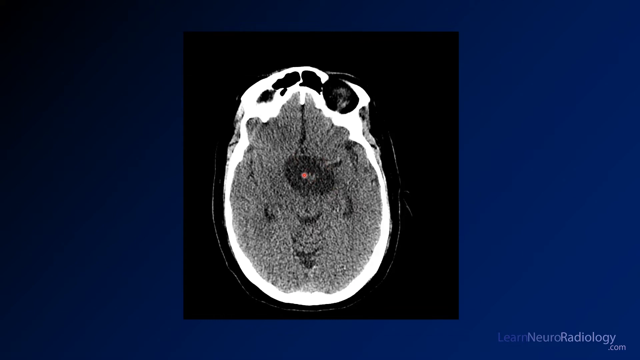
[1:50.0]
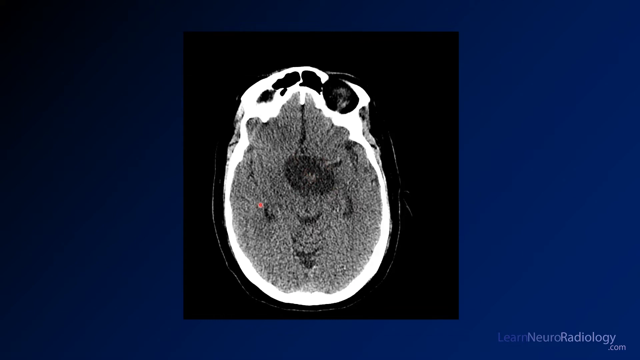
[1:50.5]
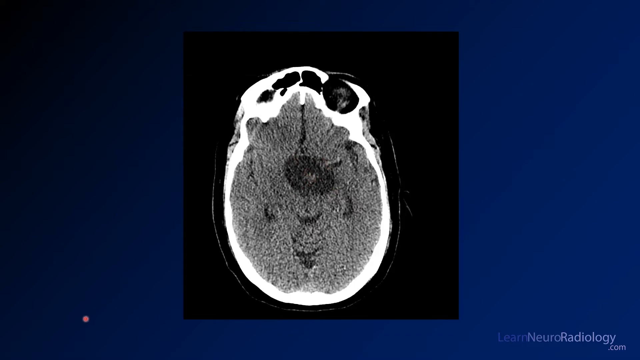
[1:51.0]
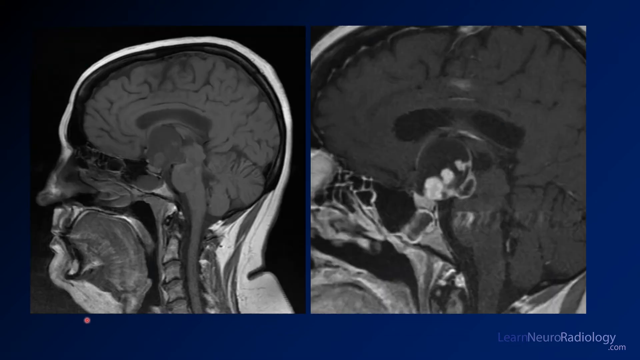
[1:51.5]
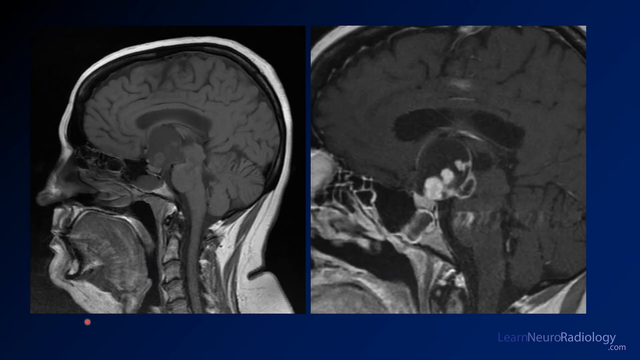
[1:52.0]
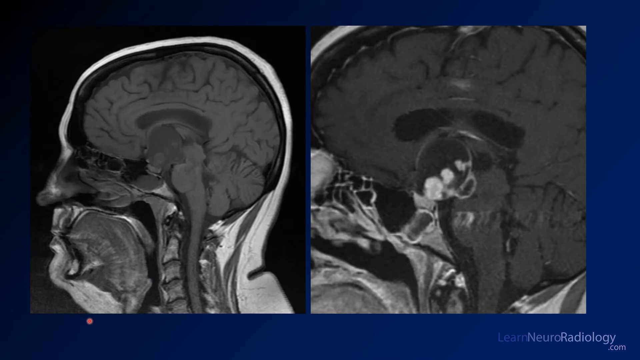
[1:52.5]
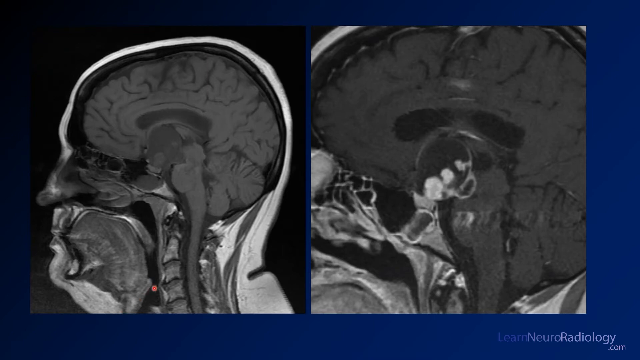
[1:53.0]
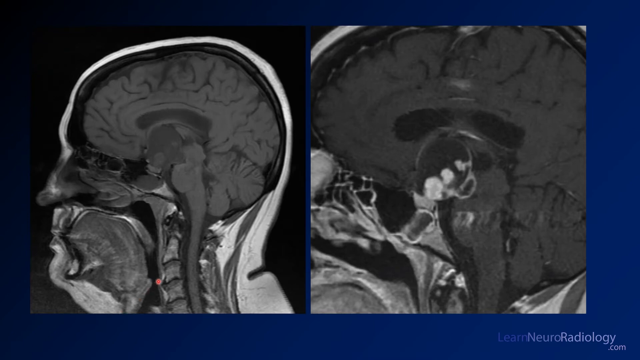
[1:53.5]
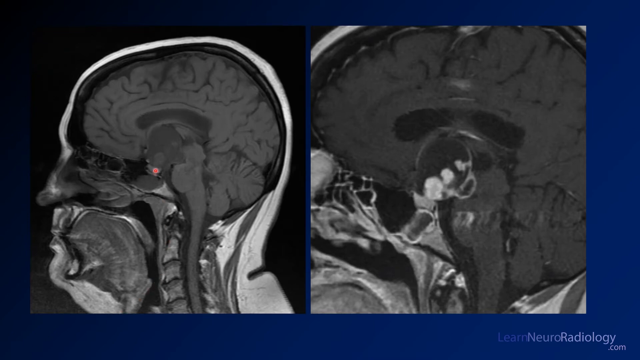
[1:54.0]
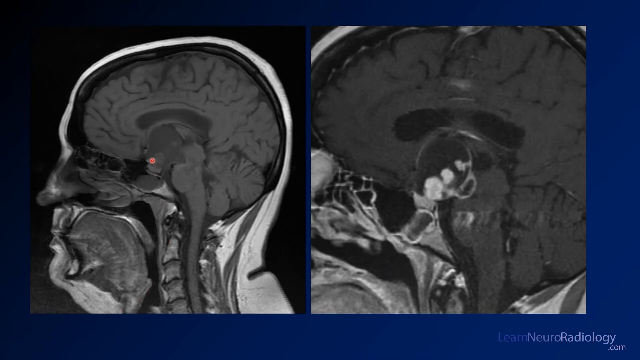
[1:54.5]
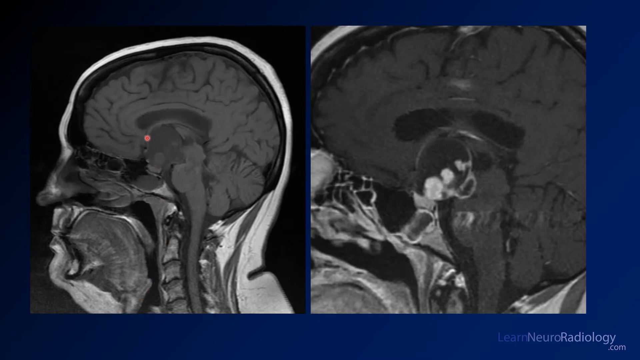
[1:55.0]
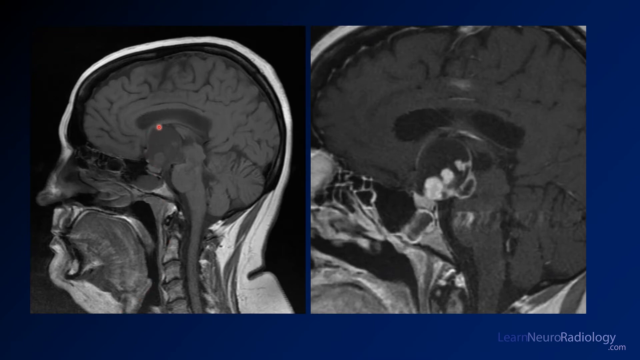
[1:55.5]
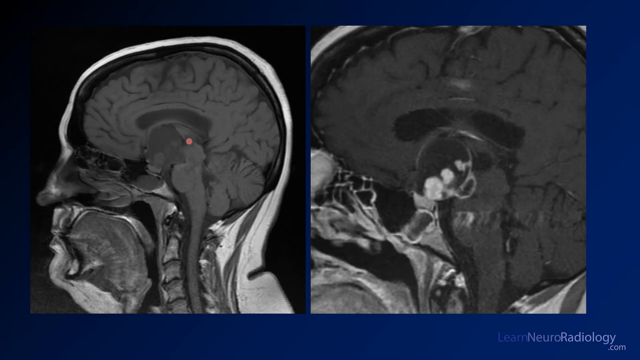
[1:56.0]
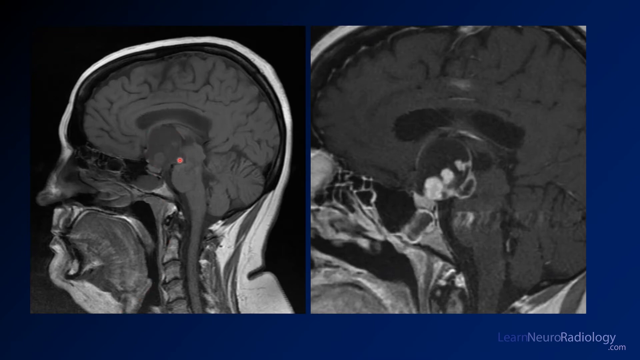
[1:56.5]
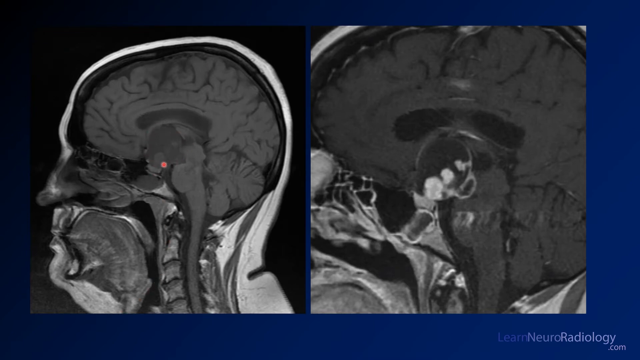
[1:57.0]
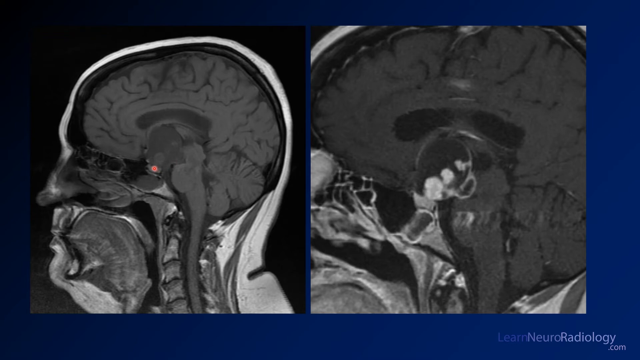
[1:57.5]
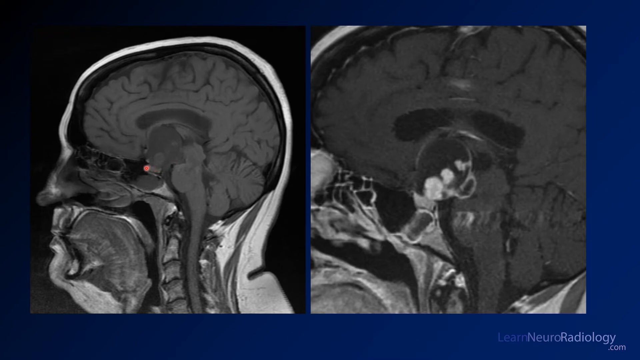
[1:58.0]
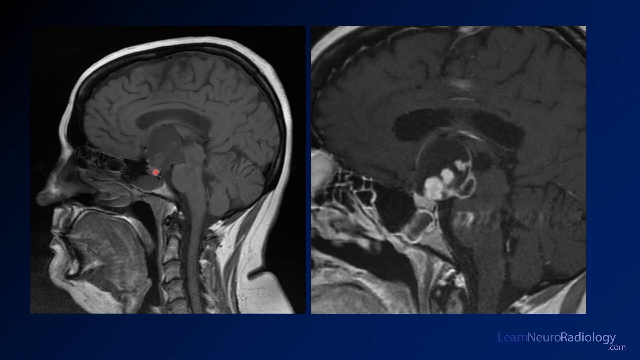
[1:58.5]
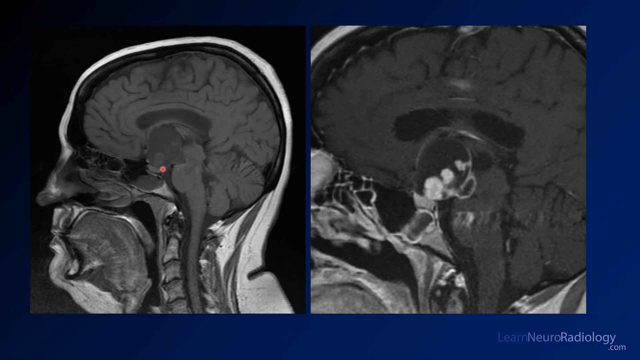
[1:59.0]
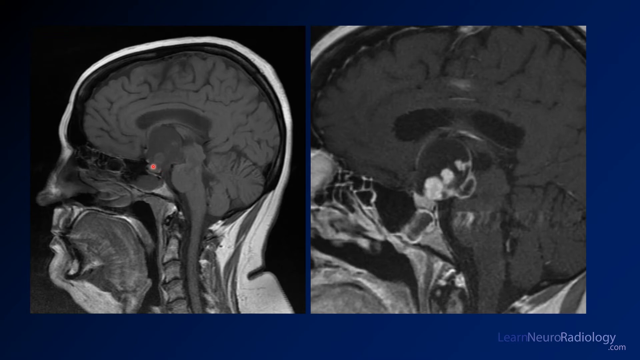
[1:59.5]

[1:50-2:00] The first image of the brain appears, with the pointer still pointing at the grey matter in the middle and the white matter within it. The video then moves to the two side-on CT or MRI scans of the brain side by side, with the forehead on the left and the zoomed-in image of the brain on the right showing some highlighted white matter. The red pointer shows where the highlighting is, moving to the gray matter in the middle. The video flips between the first image and the two side-on images to show exactly where the mass is.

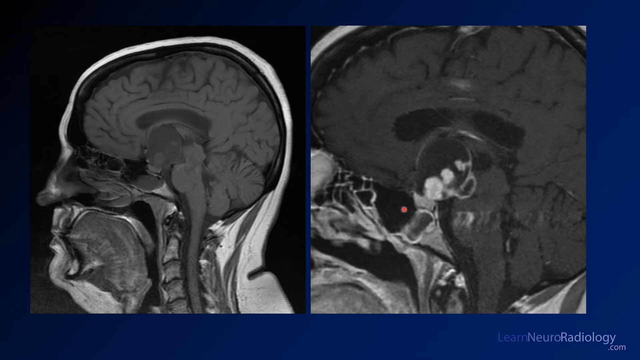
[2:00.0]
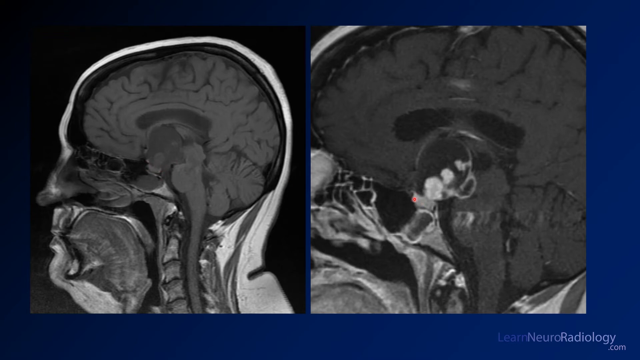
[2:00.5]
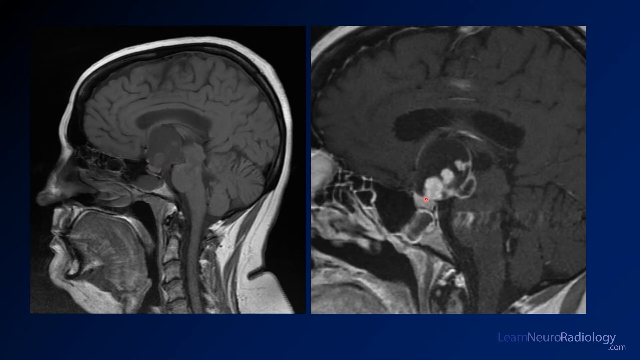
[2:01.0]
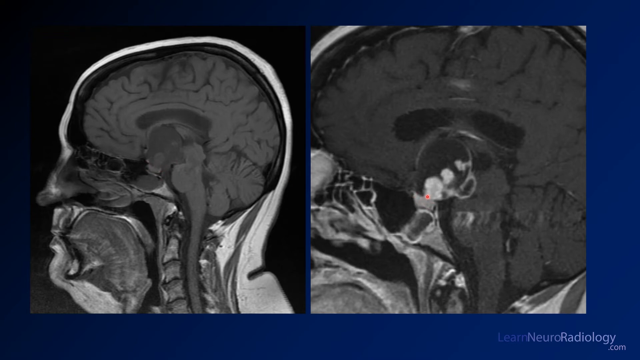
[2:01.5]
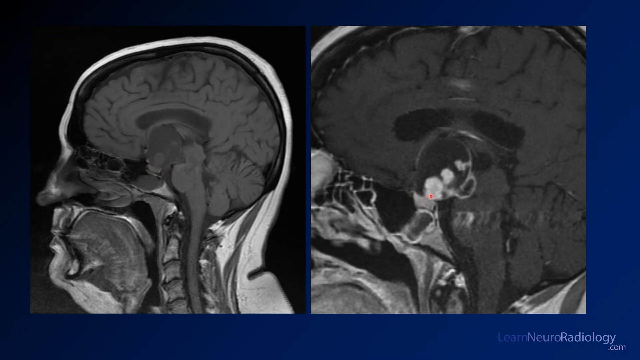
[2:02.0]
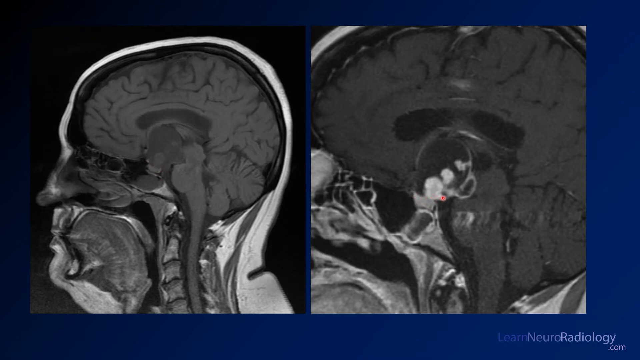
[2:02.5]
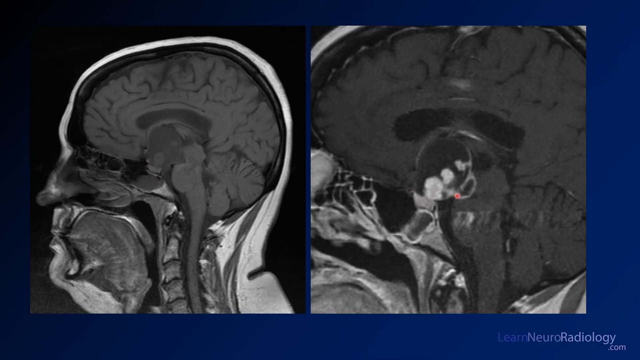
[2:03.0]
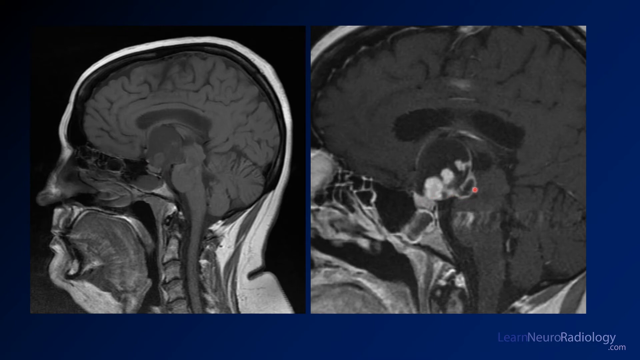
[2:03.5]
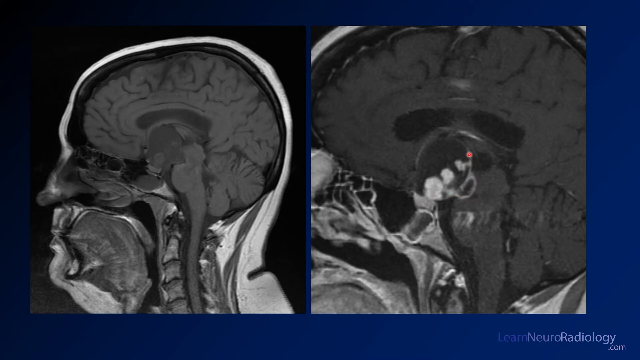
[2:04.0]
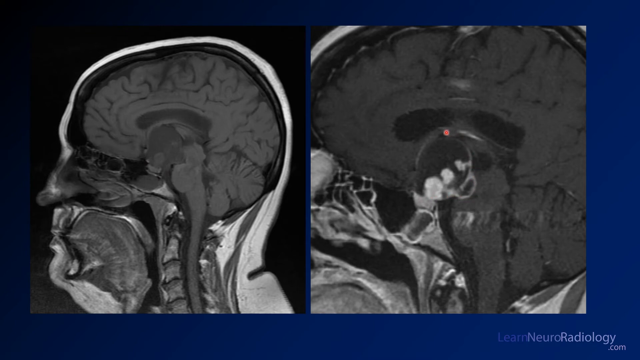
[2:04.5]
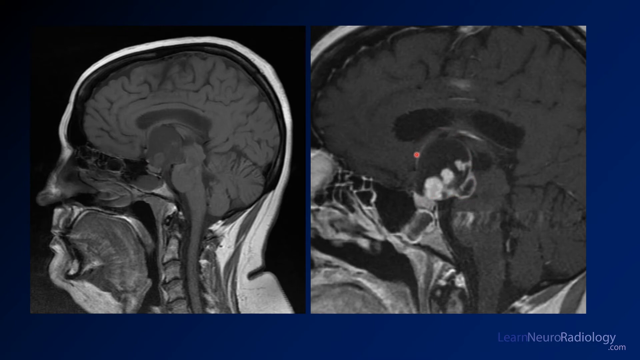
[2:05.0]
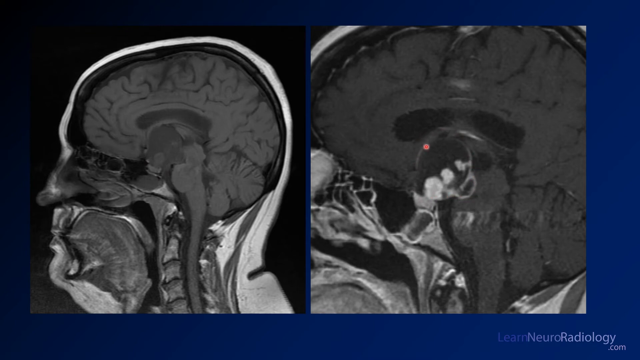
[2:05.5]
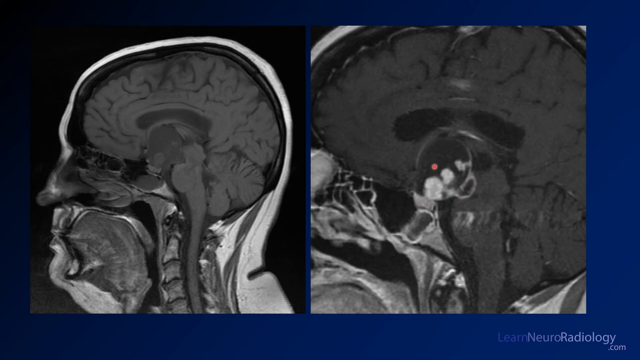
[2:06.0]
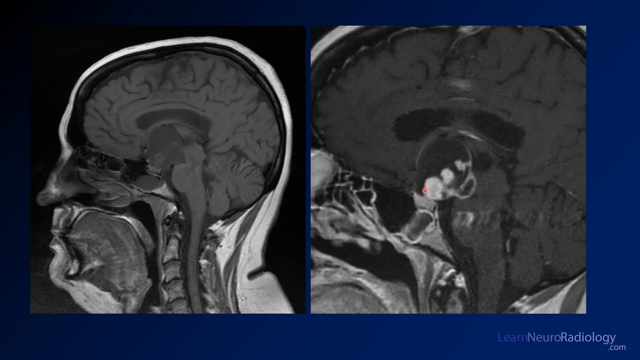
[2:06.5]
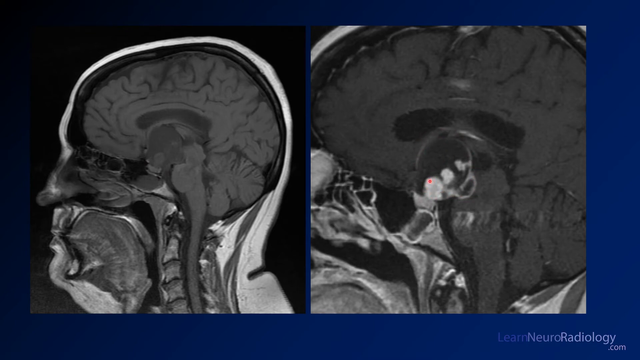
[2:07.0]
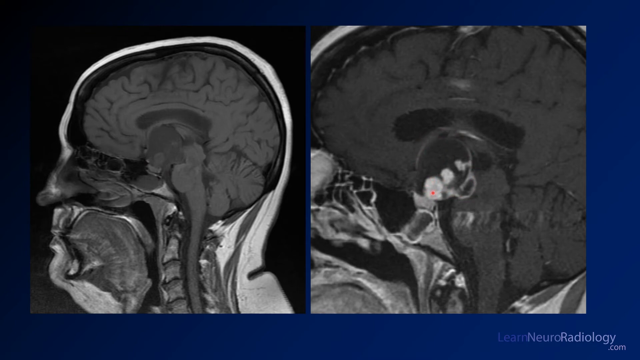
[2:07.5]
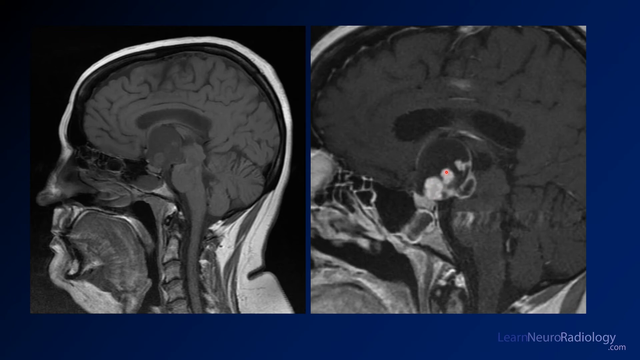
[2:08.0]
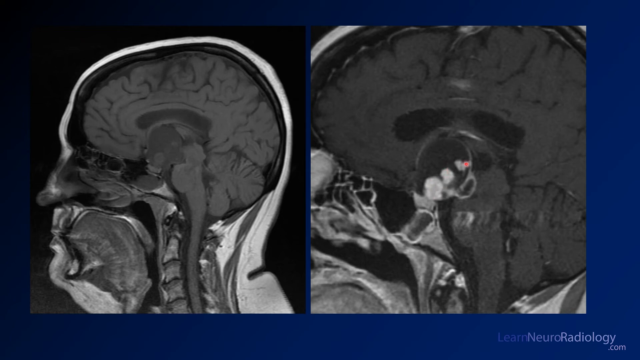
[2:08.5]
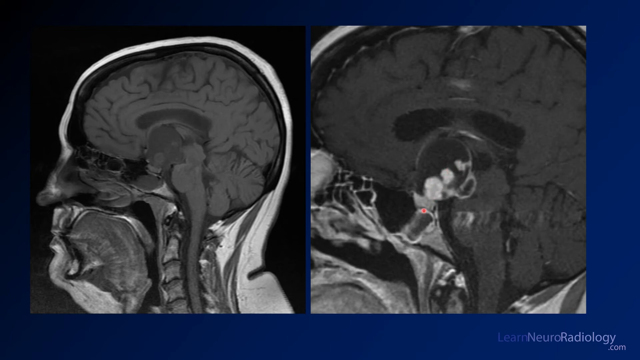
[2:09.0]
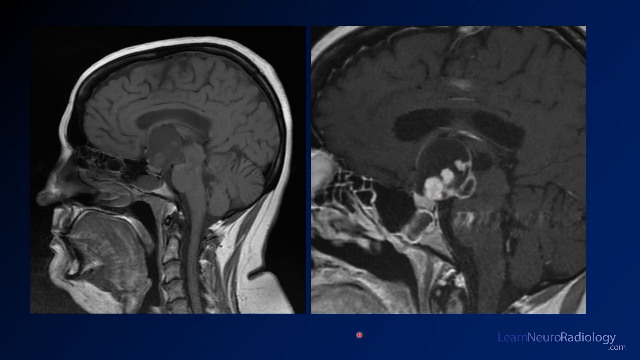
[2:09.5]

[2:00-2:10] The two side views of the head appear on the blue background. On the left is the full head, a CT of the brain that also shows the airway, the nose and the mouth. On the right is the zoomed-in picture showing the highlighted white mass. The red laser pointer moves around the small white circular highlighted areas in the brain, indicating these are the areas of concern, and it also seems to highlight the area around them, outlining the central core of the brain. The two pictures are static; only the red pointer moves.